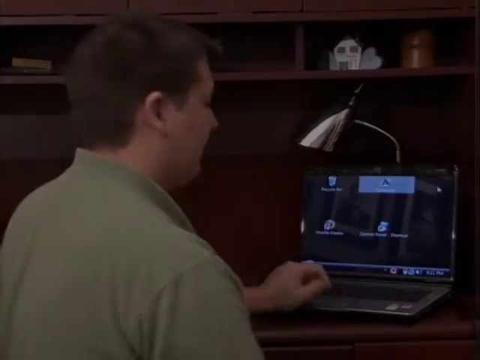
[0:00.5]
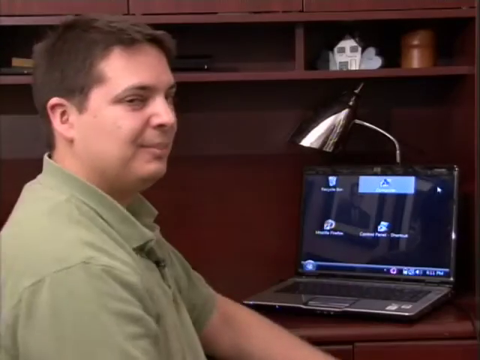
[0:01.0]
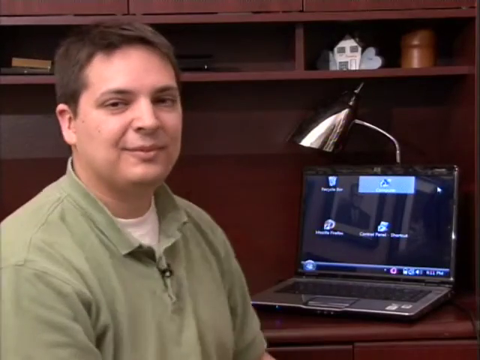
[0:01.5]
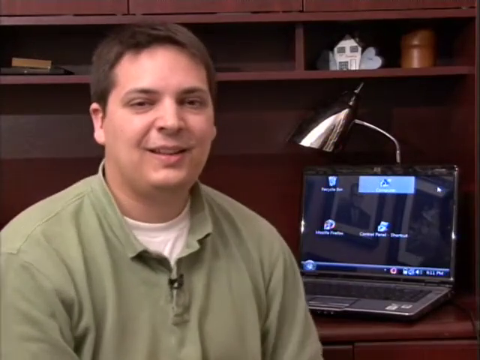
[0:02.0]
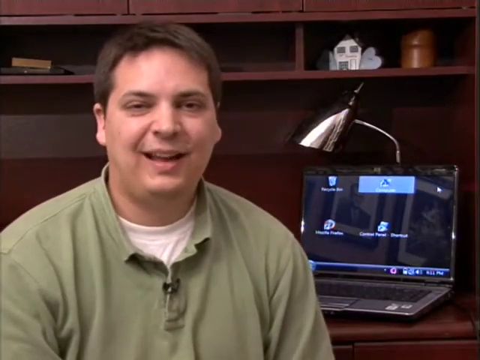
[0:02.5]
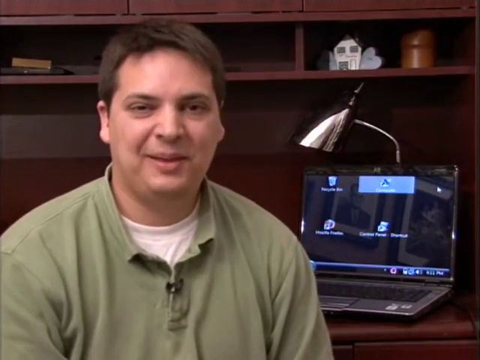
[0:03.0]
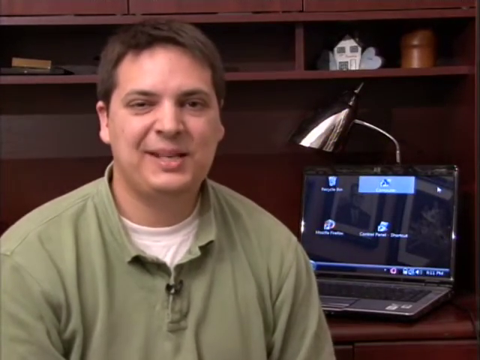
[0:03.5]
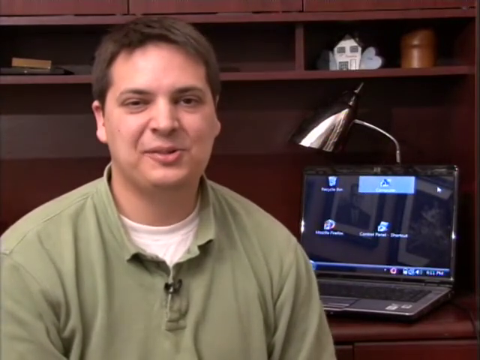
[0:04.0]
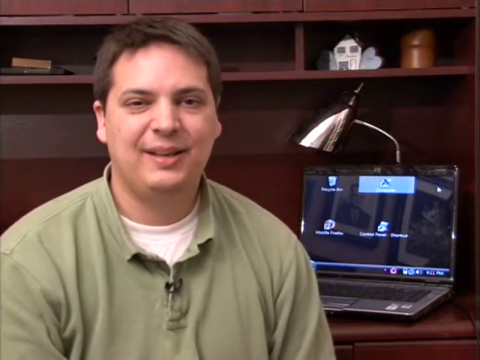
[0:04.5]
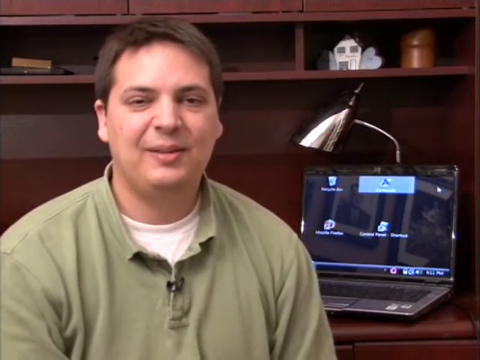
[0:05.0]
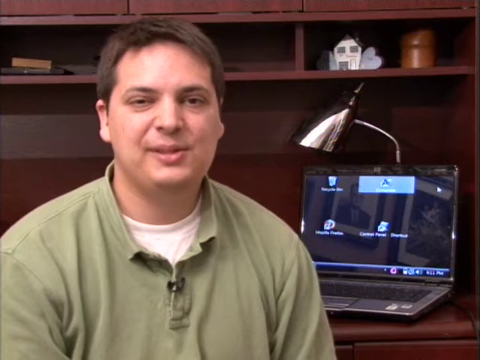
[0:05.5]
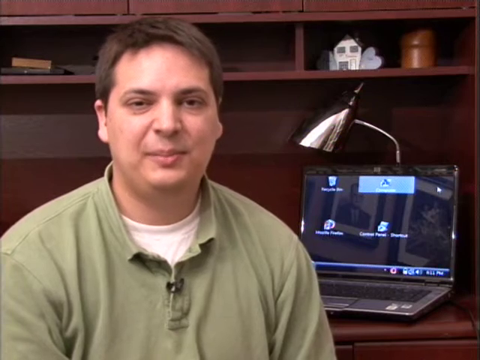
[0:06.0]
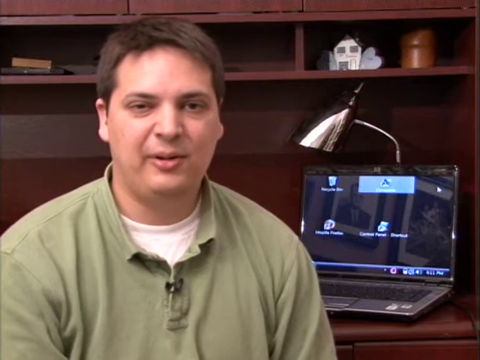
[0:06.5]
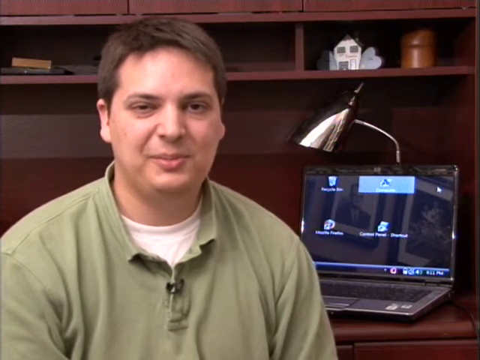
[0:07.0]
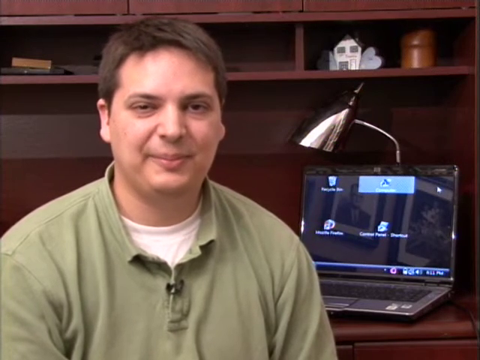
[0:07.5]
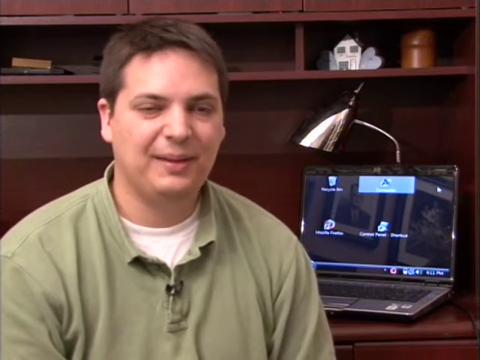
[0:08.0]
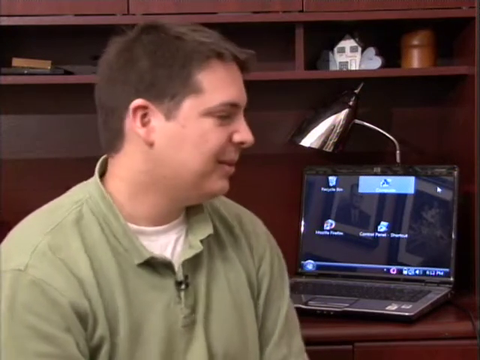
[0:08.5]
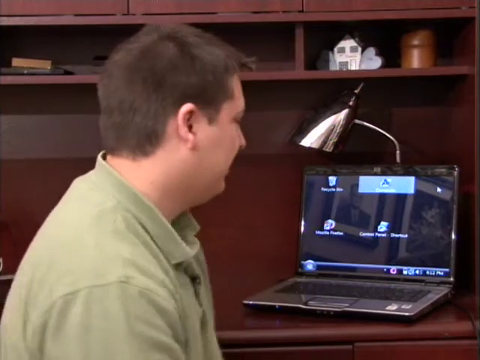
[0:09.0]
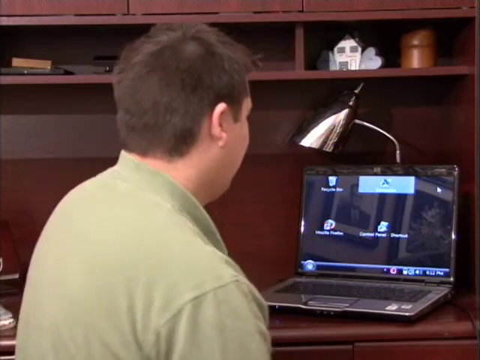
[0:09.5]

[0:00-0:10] A man wearing a green polo shirt with a white t-shirt underneath faces a laptop. A little house ornament is at the top of a shelf with a little brown box next to it, and there are little hearts on the shelf. Some little books are on the left-hand side. He has brown hair, is a little bit chubby, and has a microphone on his top. He turns back around to face the laptop, puts his left hand on the keyboard, and talks to the screen, then turns to the laptop to use the keyboard. He is smiling and looks happy, and looks like he is going to be telling some information.